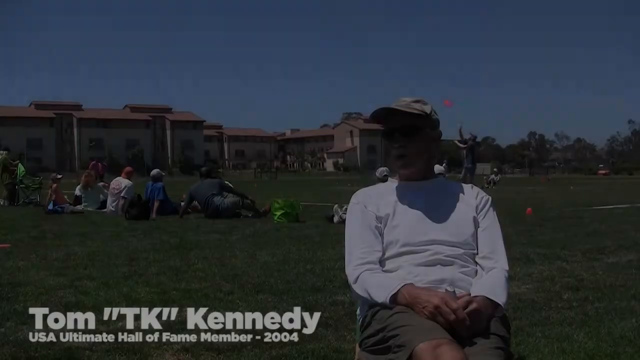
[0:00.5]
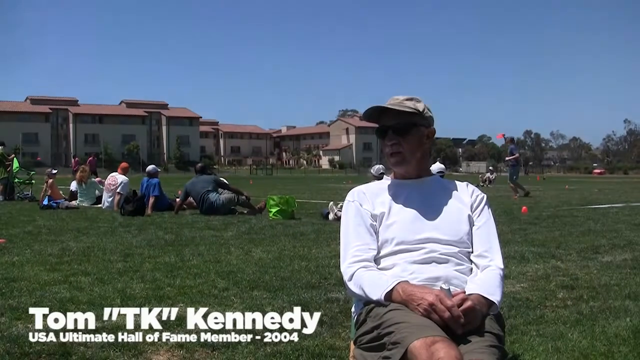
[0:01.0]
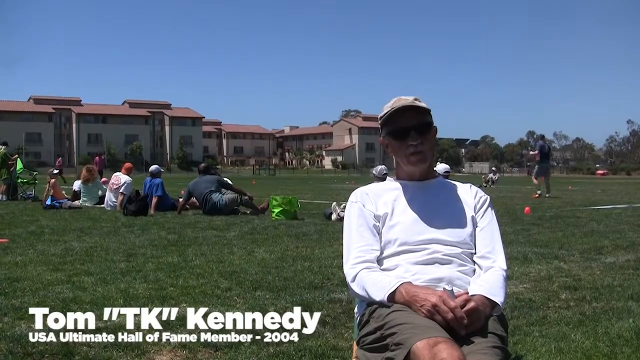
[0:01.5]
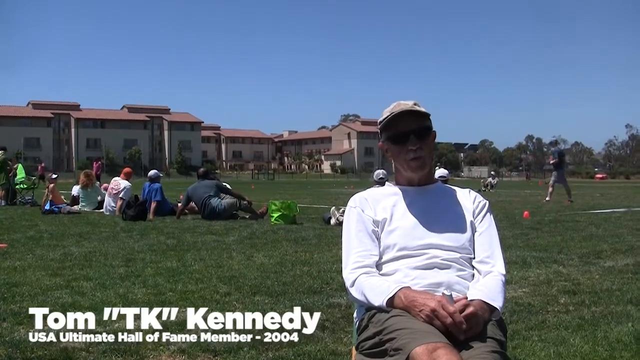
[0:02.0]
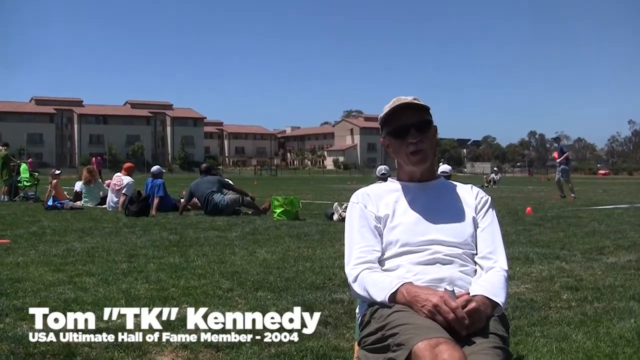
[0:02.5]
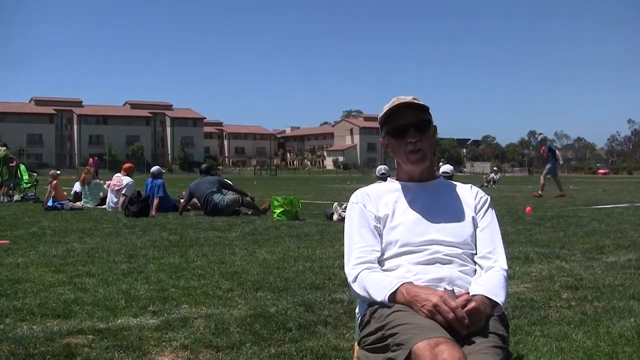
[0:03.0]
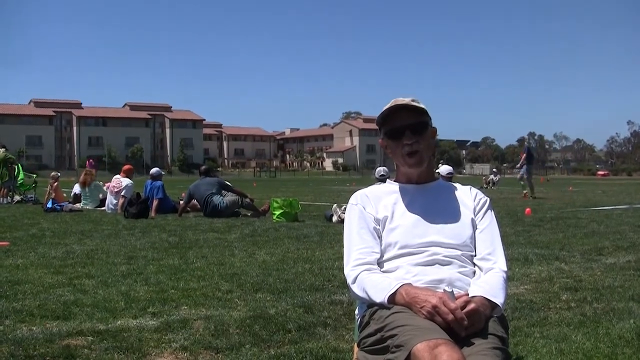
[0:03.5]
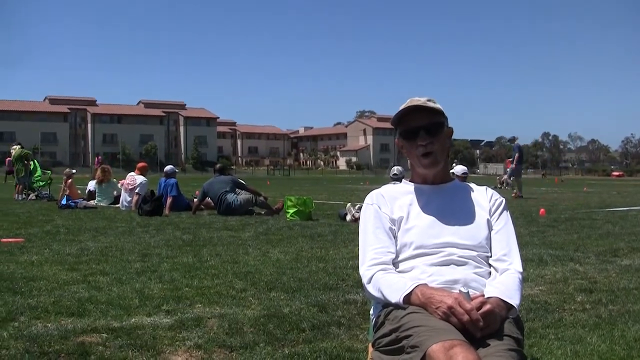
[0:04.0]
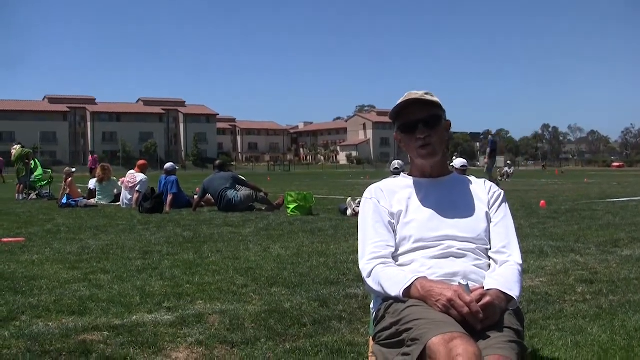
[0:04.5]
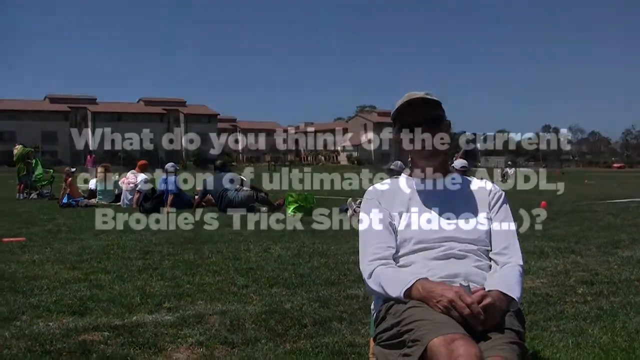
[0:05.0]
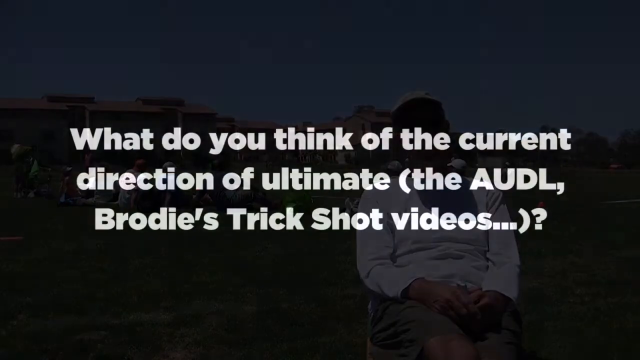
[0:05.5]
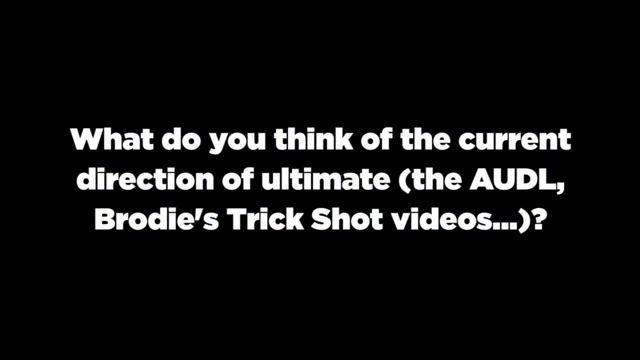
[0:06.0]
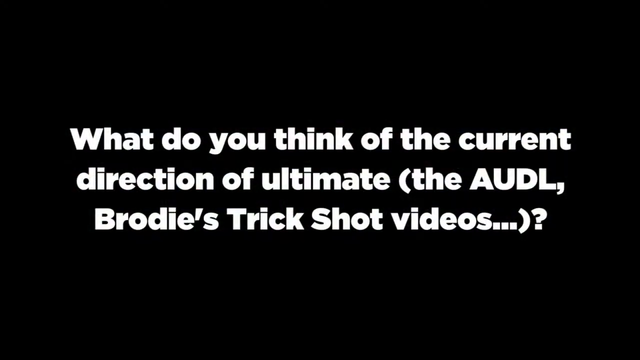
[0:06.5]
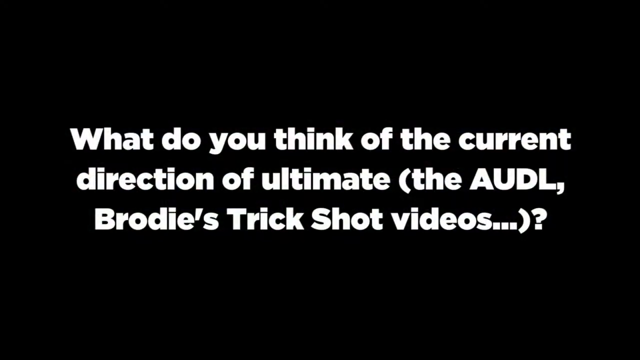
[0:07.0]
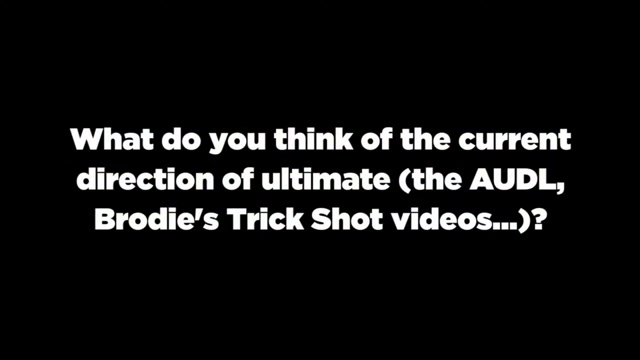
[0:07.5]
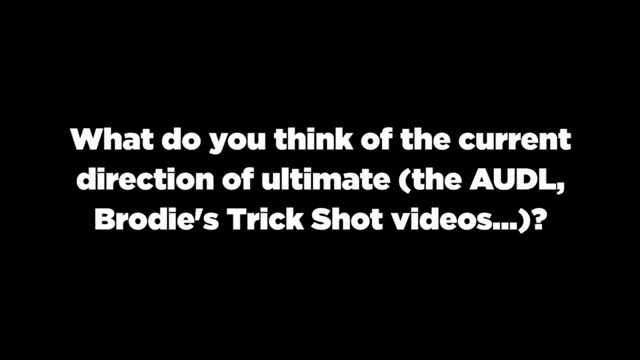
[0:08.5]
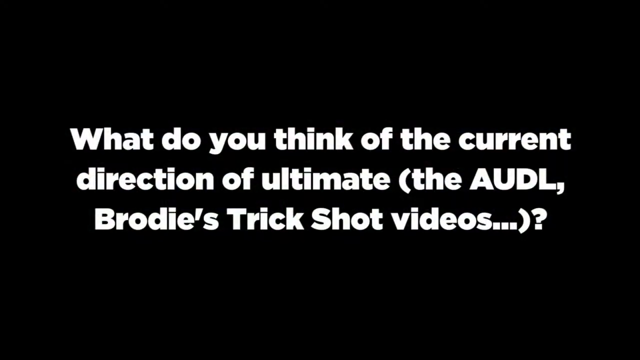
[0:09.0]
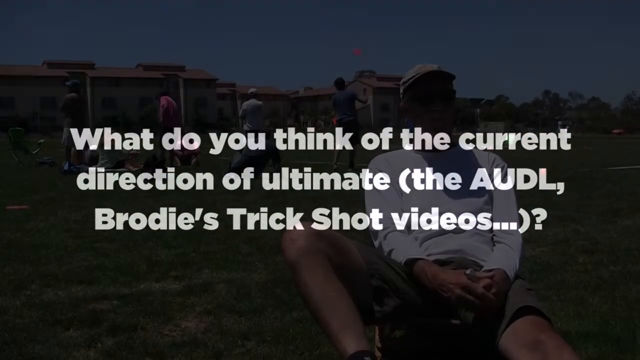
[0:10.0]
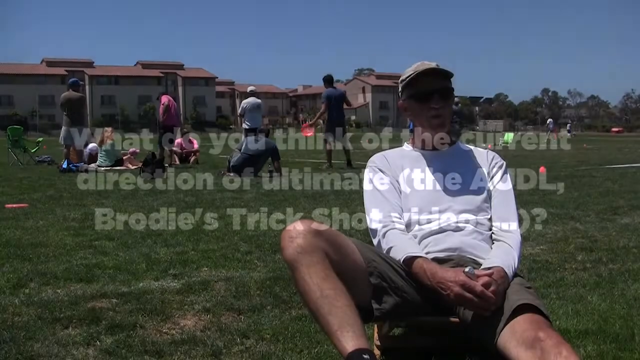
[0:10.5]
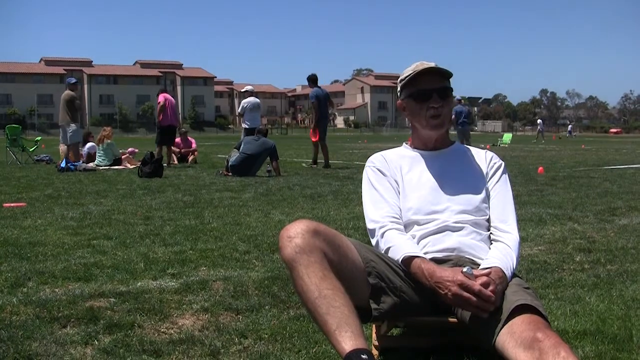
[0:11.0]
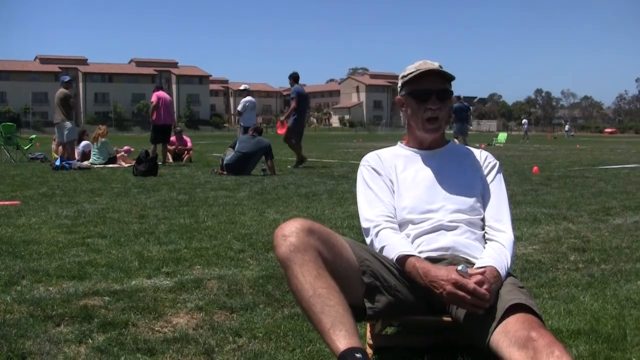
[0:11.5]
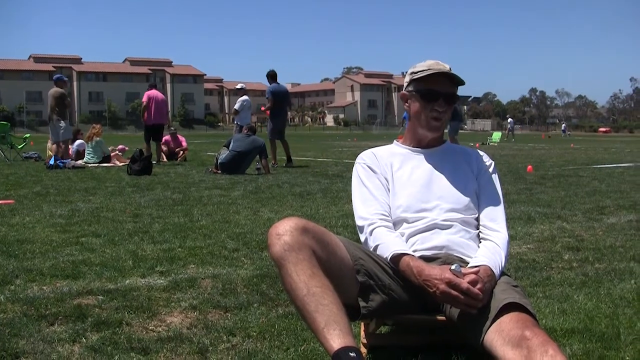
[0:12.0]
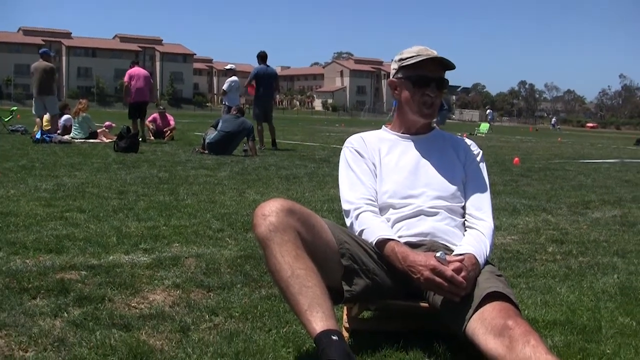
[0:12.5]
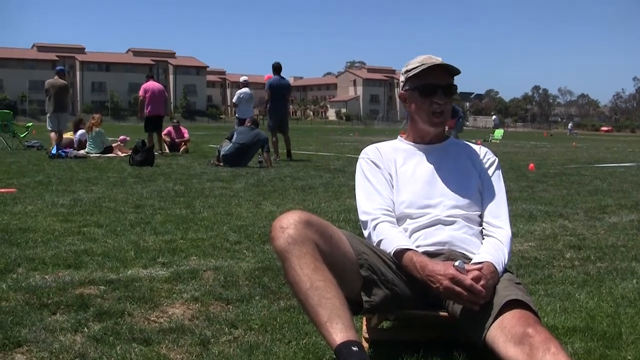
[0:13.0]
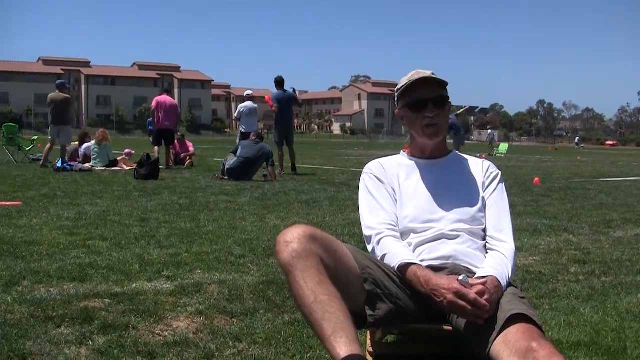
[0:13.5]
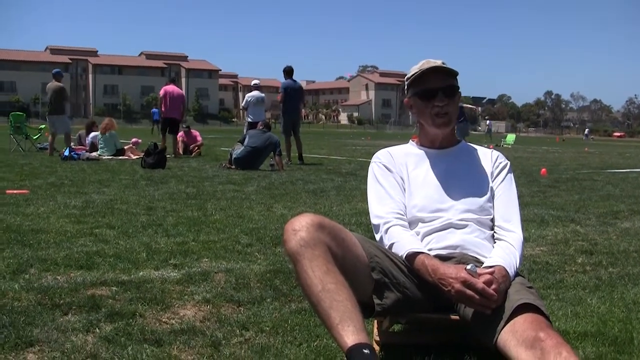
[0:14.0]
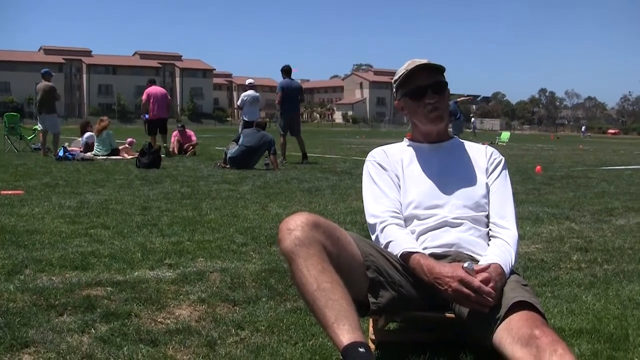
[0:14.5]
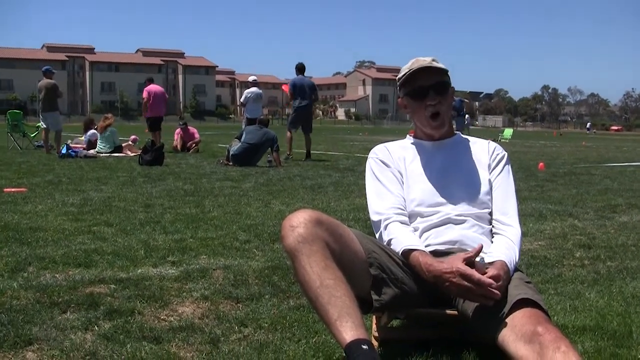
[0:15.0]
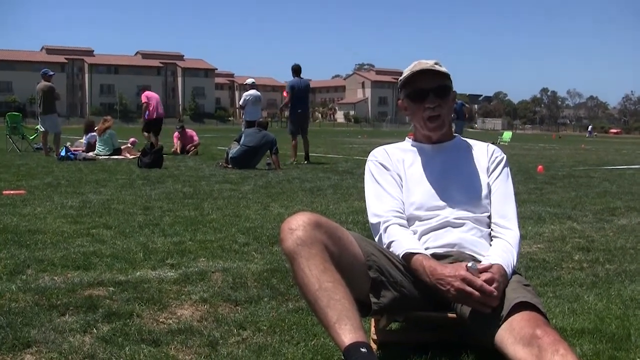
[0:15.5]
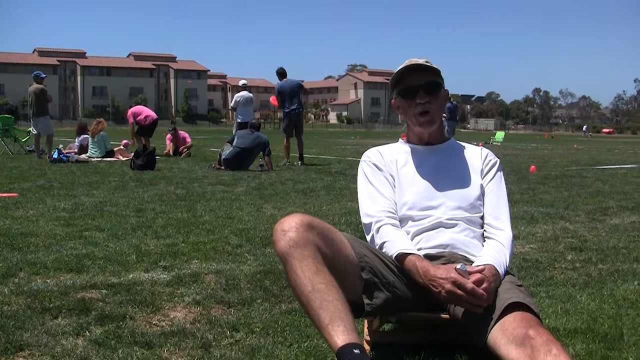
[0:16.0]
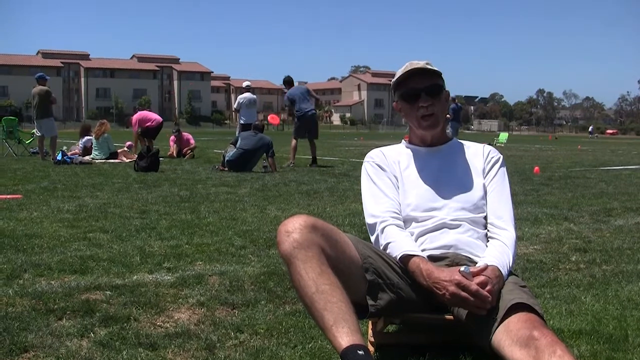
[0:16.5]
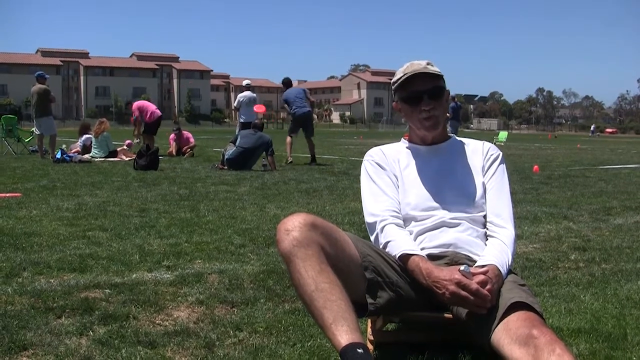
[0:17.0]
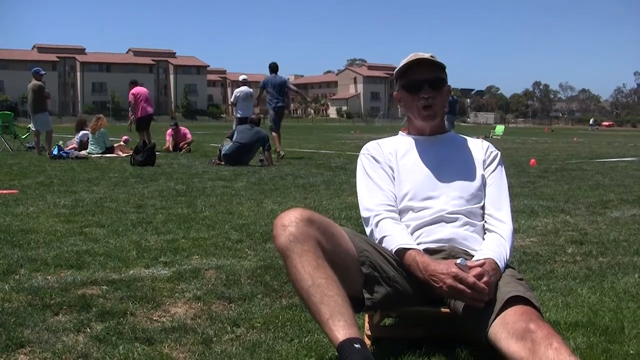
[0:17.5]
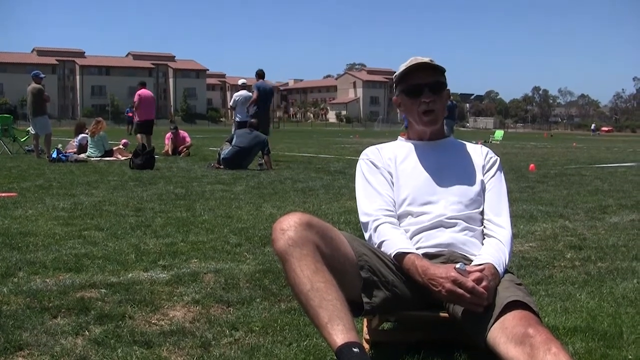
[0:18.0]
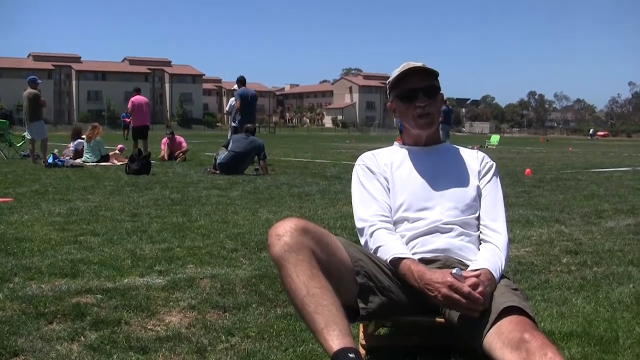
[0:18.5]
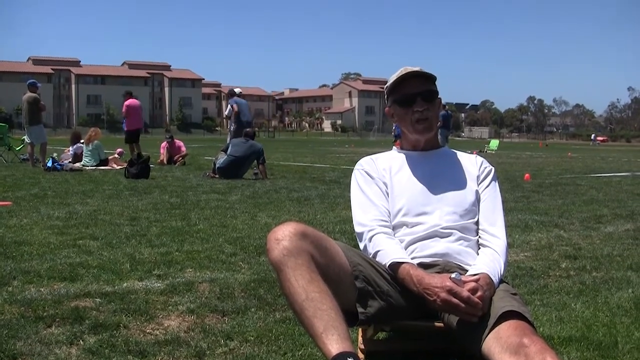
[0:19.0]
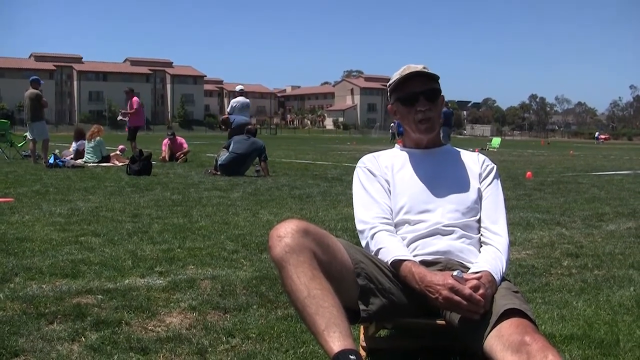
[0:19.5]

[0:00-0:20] The video opens on an athletic field, with apartments or condos and some trees in the background behind the field. In the center right of the foreground is a man identified as "Tom T.K. Kennedy", "Ultimate Hall of Fame member from 2004", who is being interviewed. A question is posed on the screen: "what do you think of the current direction of Ultimate, the AUDL, Brody's trick shot videos, et cetera". Kennedy appears to be responding to the interviewer's questions. He wears a long-sleeve white t-shirt, a baseball cap, sunglasses and khaki shorts, and he is in a lawn chair. His right knee is bent with his right leg hanging to the right side, while his left leg appears to be straight. Behind him are about 15 or 16 people in a small grouping, half sitting on the ground and half standing. Some appear to be tossing frisbees back and forth with a partner, while a young man plays with a frisbee by himself, tossing it from hand to hand or rotating it off his body across his chest from his left hand to his right. A small group of about three people sits on a blanket. There are fluorescent green lawn chairs, one in the center of the field and another to the left of the screen, along with small orange markers, and the field looks roped off into smaller rectangular areas. Some people seem to be in pairs because they wear similar shirts: one pair both wear hot pink shirts, and another pair wear deep charcoal shirts. The group is diverse in race, gender and age, including Black and Caucasian people who look to be both male and female, with some appearing to be in their mid to late teens and some older adults.